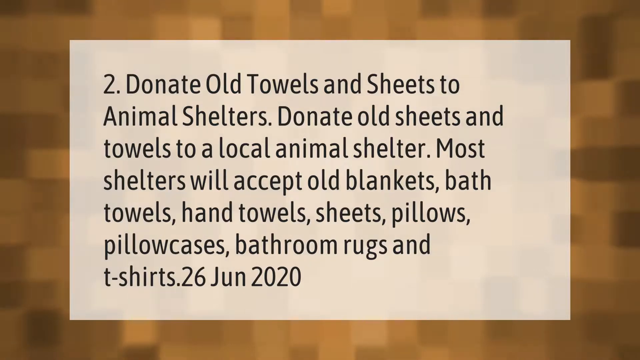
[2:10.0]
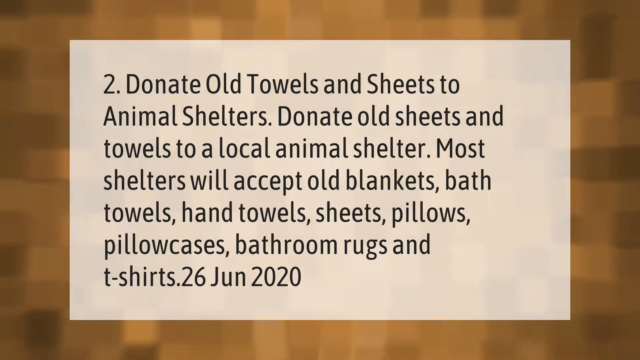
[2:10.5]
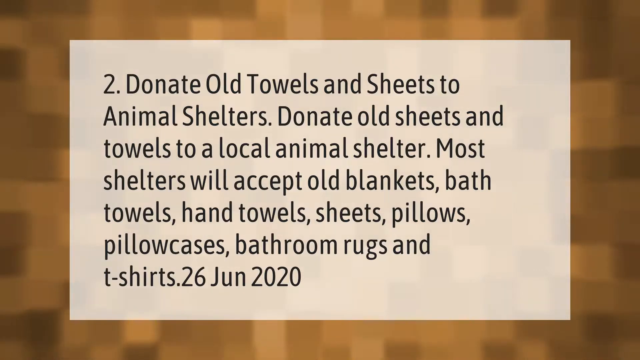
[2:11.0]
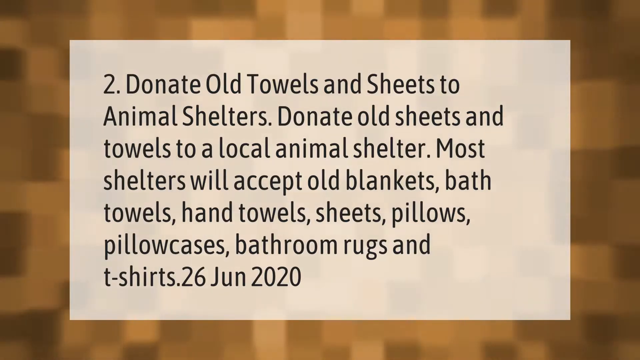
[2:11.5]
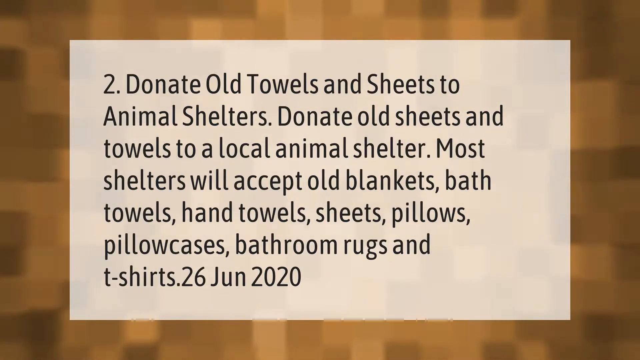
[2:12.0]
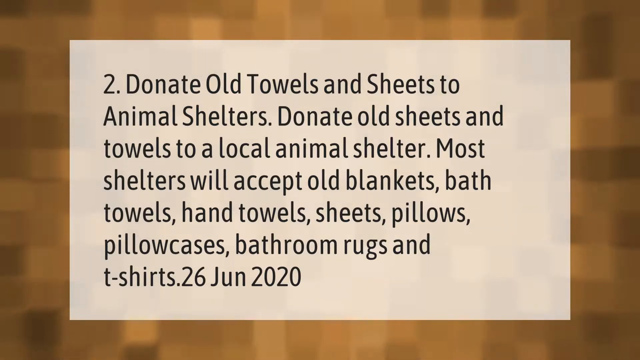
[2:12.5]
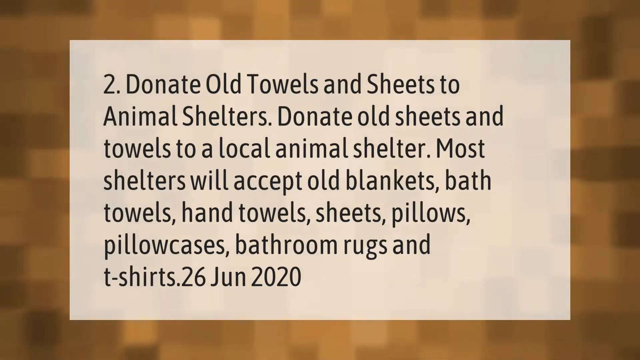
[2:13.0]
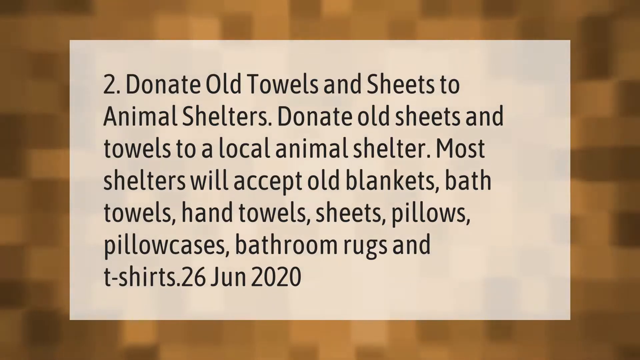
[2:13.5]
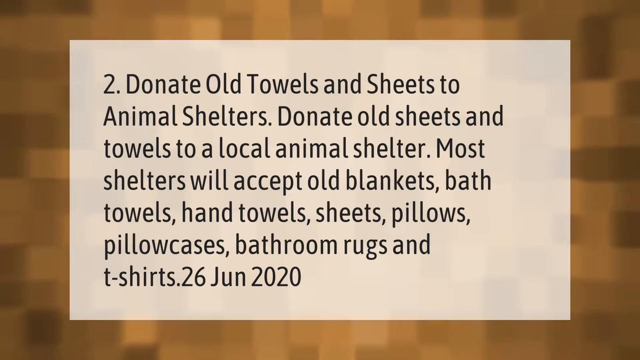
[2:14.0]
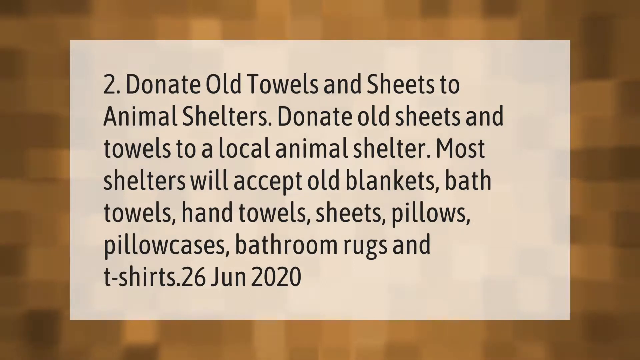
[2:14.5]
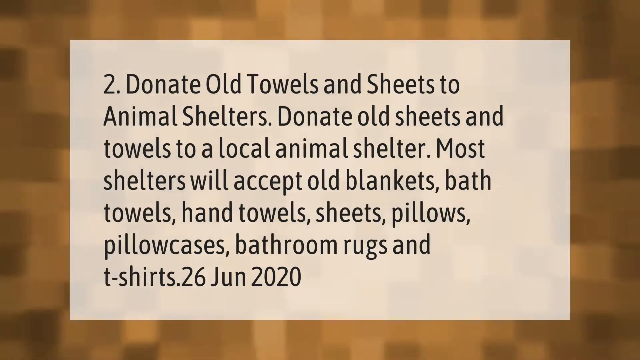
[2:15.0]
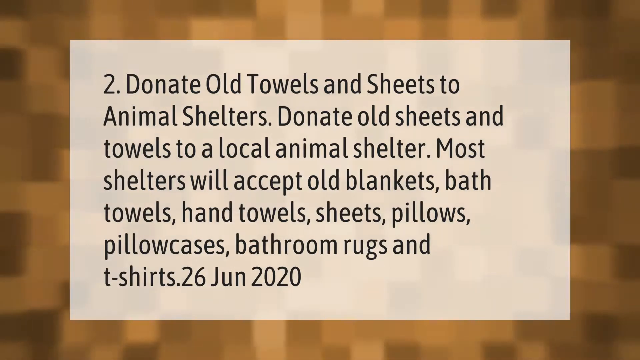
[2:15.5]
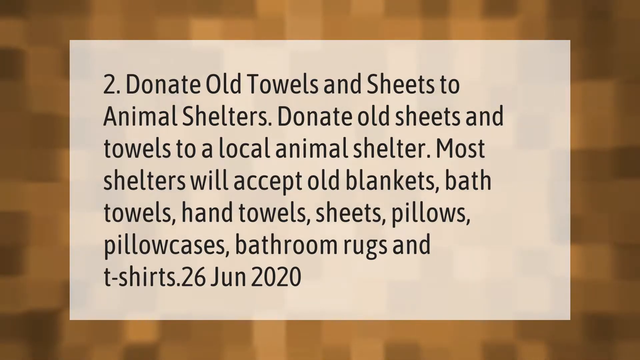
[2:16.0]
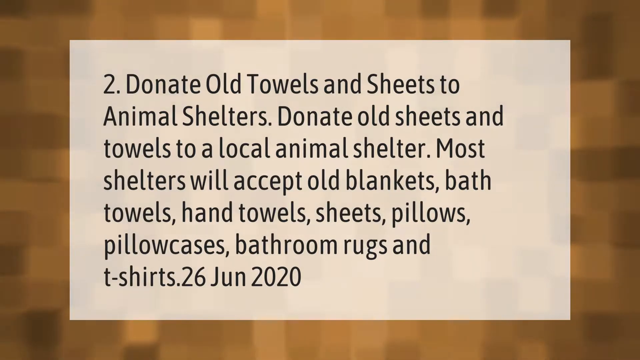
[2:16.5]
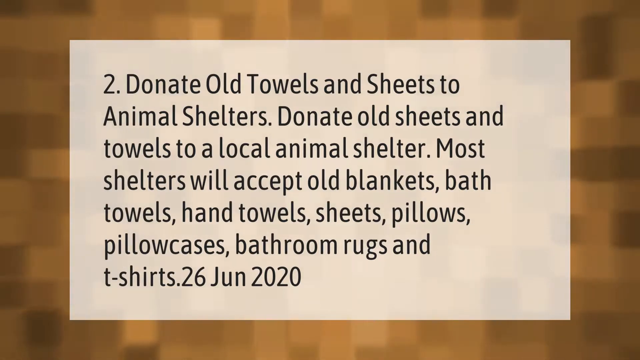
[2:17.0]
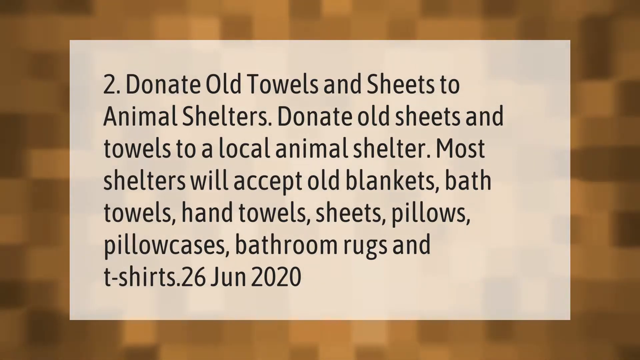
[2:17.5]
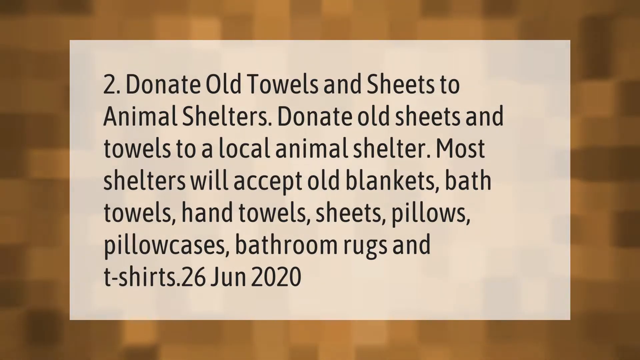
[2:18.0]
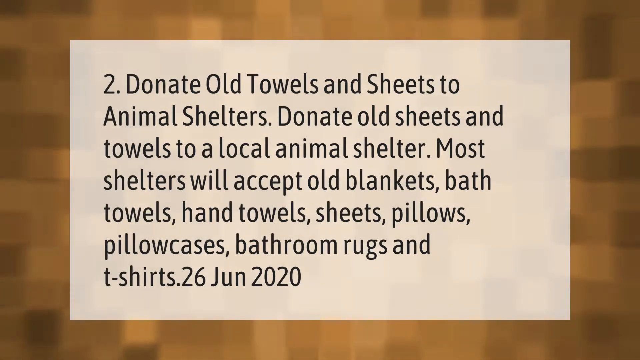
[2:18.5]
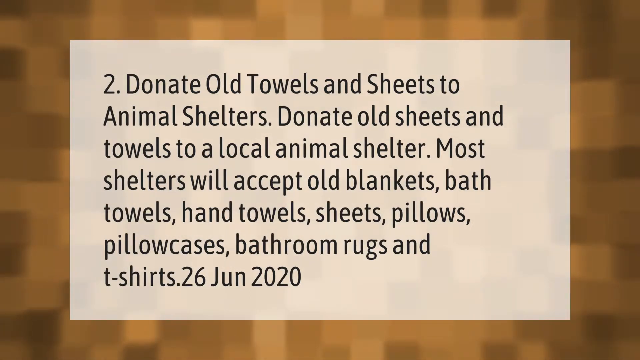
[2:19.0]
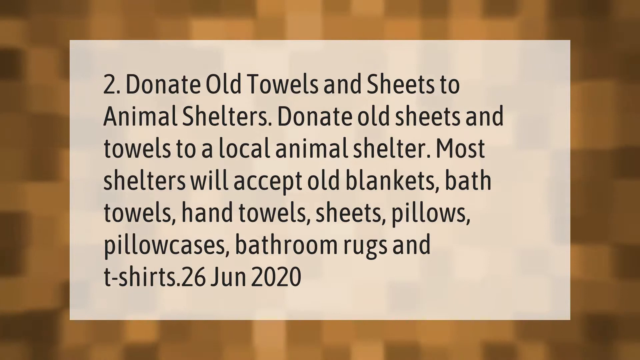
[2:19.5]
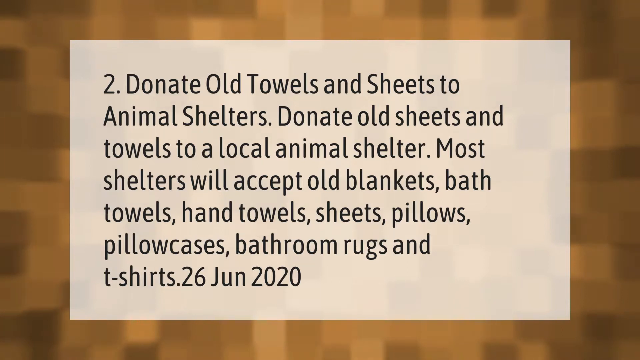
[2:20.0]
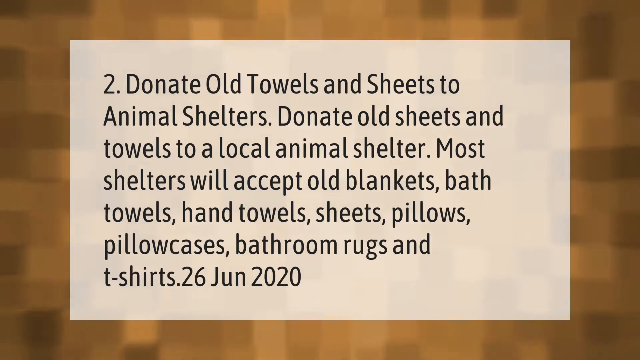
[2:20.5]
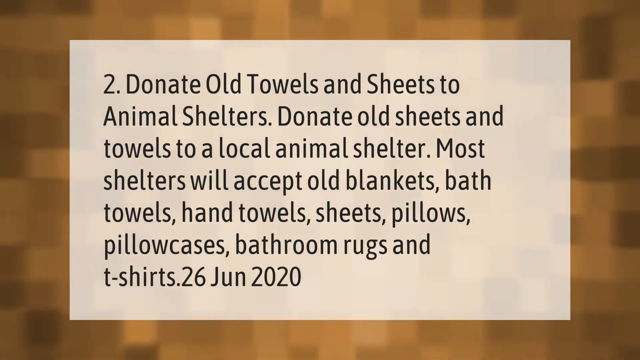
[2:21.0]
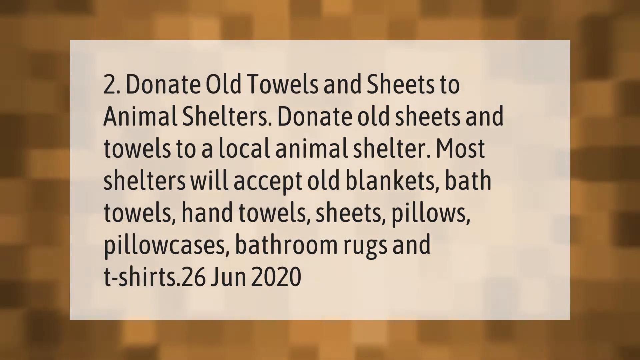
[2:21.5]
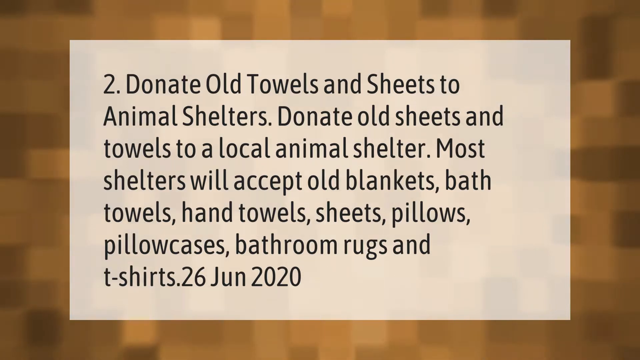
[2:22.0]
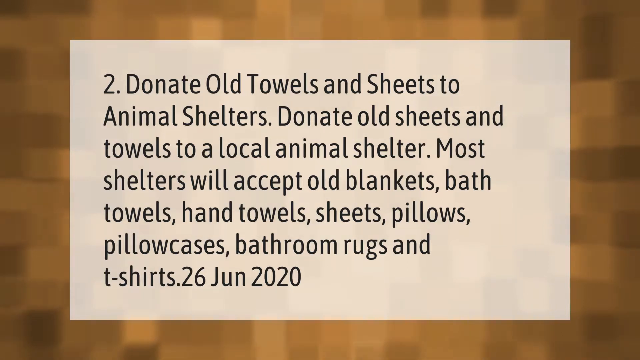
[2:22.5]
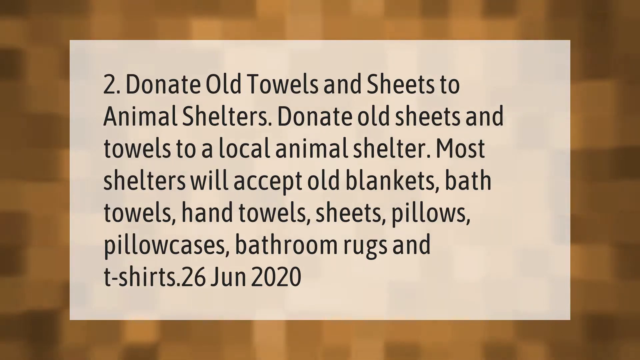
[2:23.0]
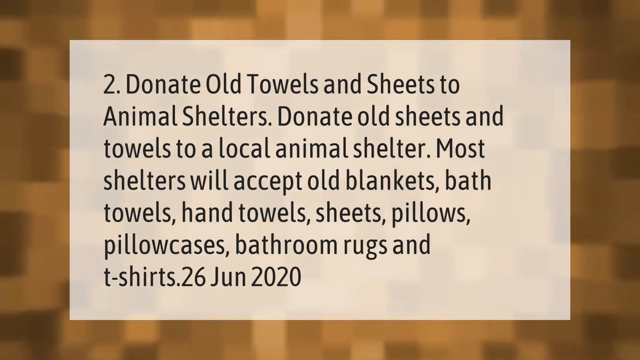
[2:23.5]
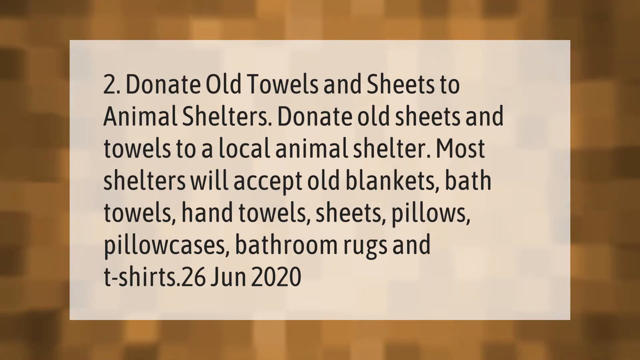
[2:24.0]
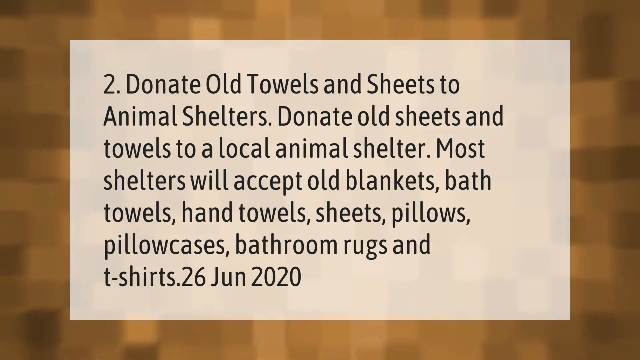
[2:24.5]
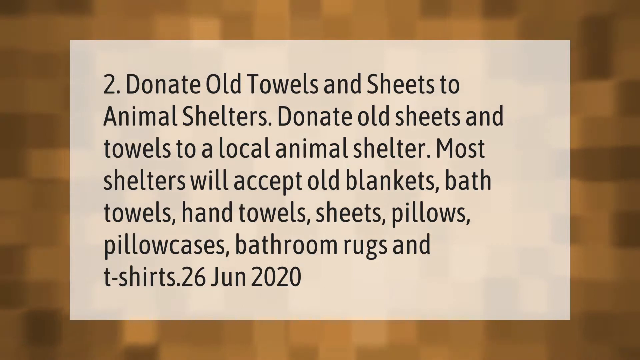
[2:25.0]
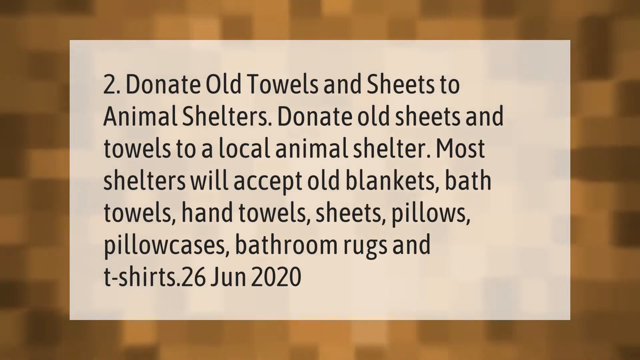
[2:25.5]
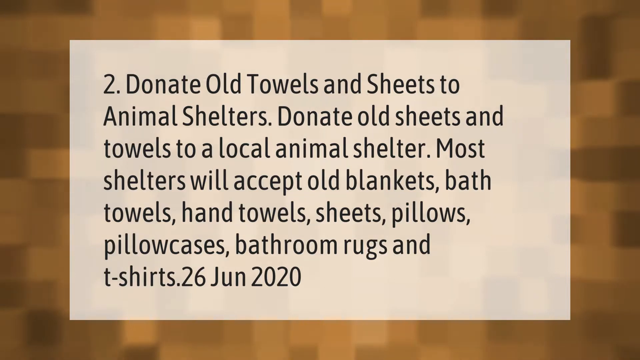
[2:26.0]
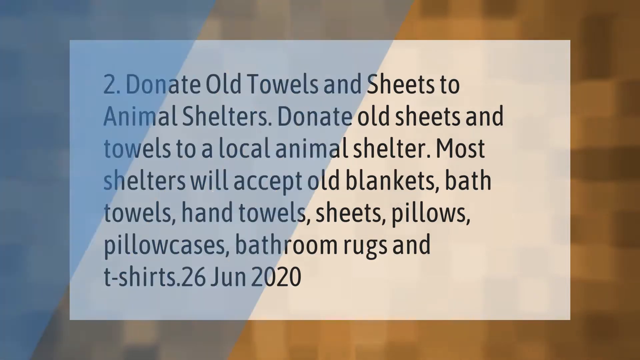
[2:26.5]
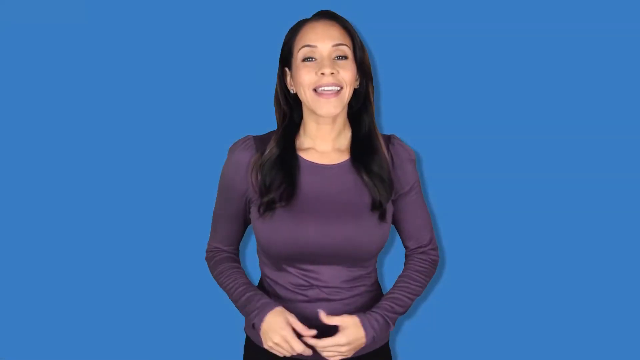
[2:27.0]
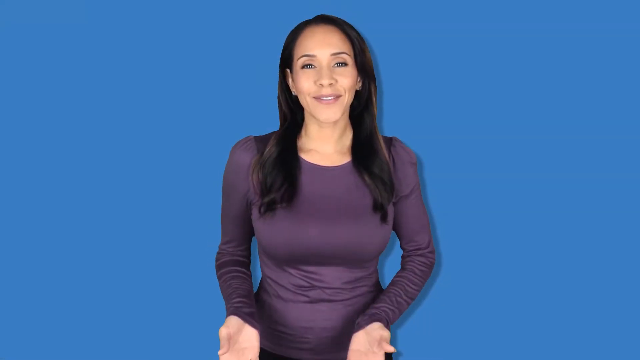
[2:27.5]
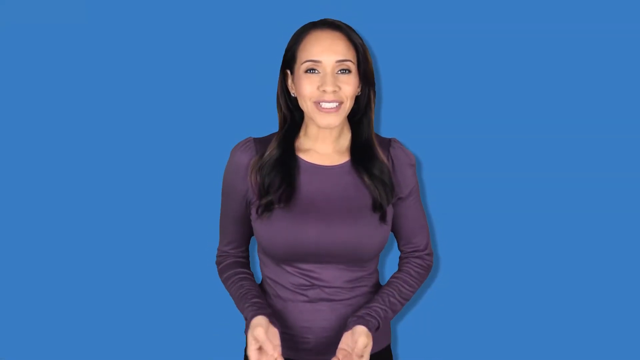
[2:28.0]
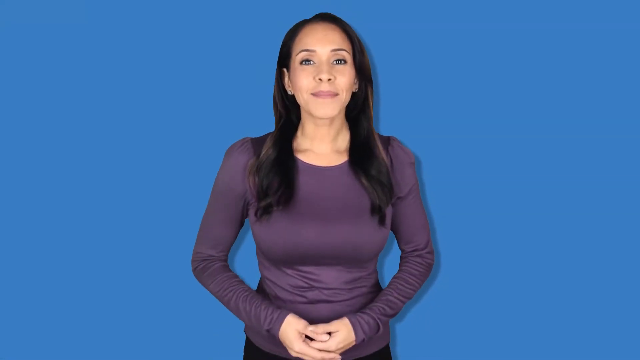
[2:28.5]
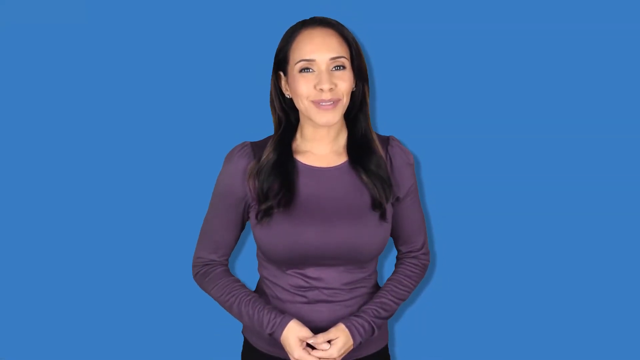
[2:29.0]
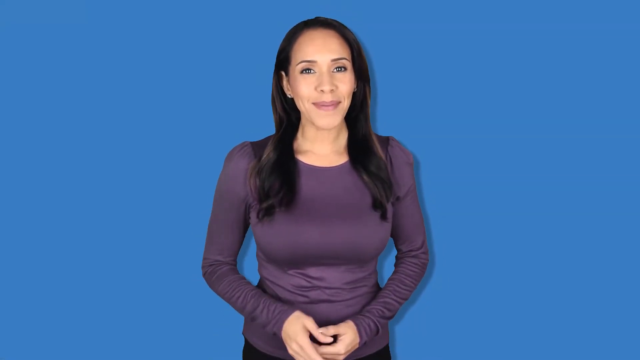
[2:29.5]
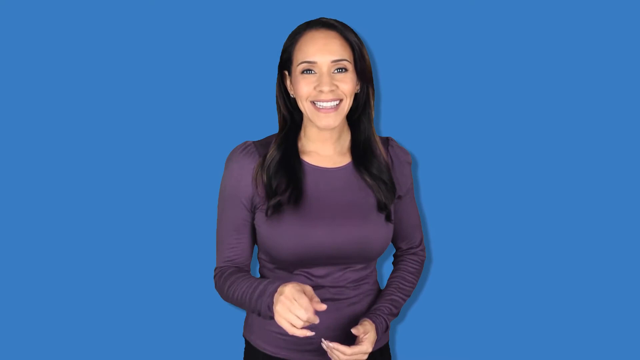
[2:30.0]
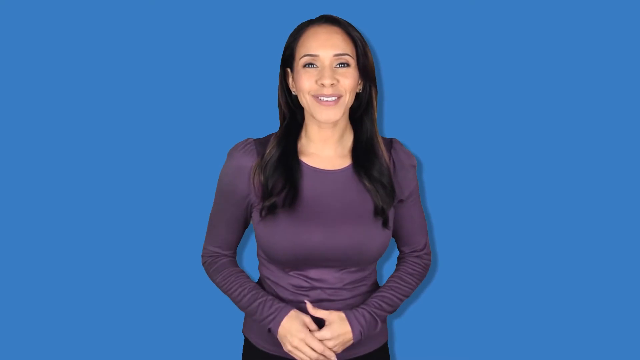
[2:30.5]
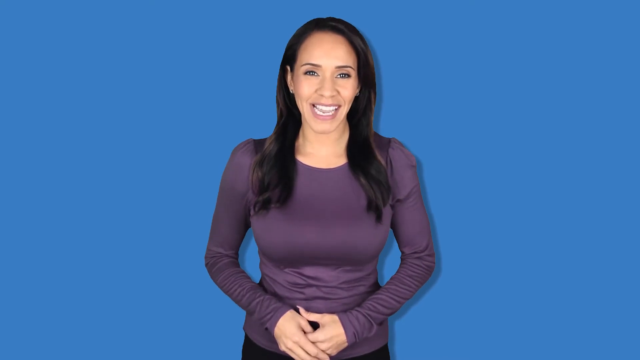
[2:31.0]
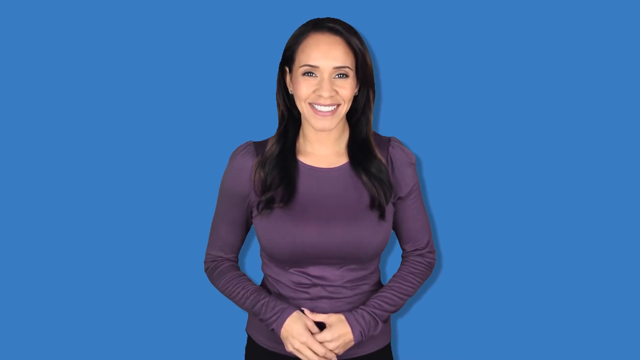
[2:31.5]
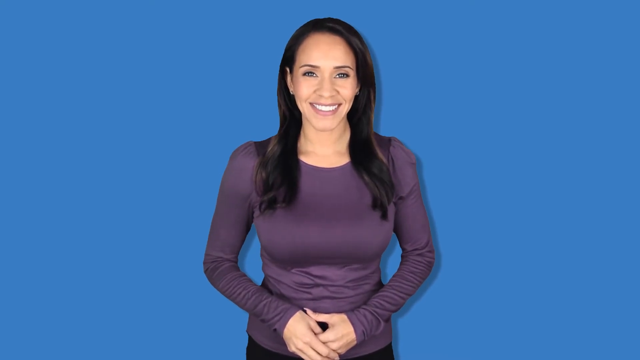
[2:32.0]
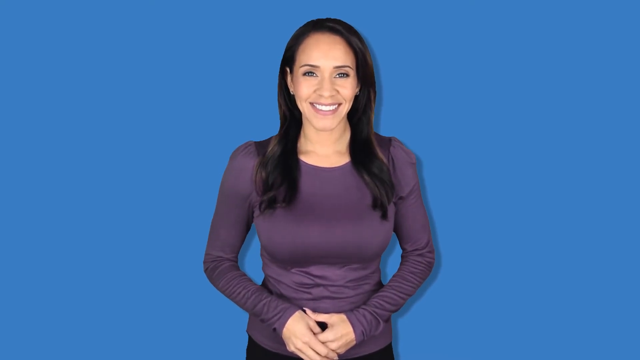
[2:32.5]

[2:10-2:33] Text is about donating old belongings to people or to animal shelters. The scene then shows the lady standing behind a blue background, still wearing a purple shirt and smiling, and the video ends.